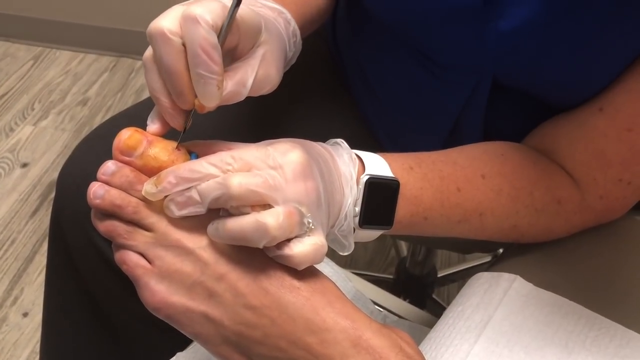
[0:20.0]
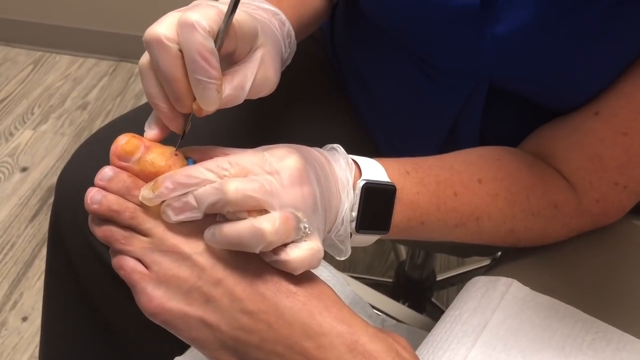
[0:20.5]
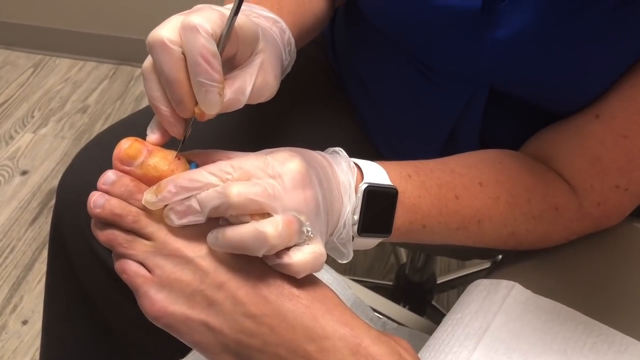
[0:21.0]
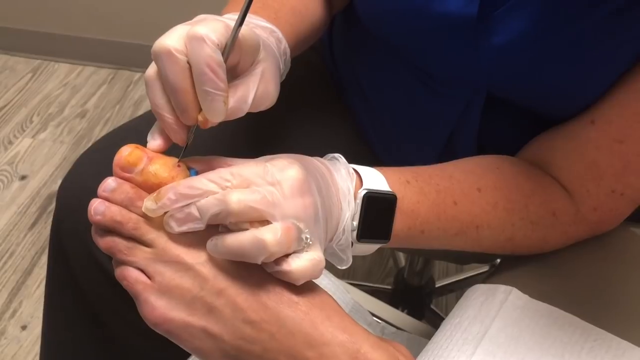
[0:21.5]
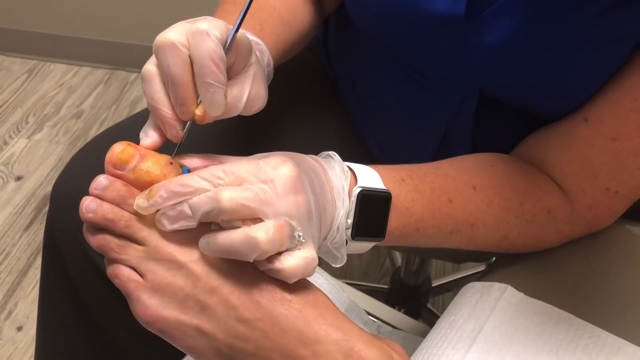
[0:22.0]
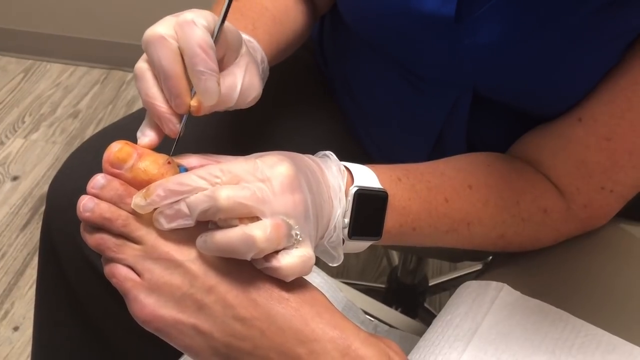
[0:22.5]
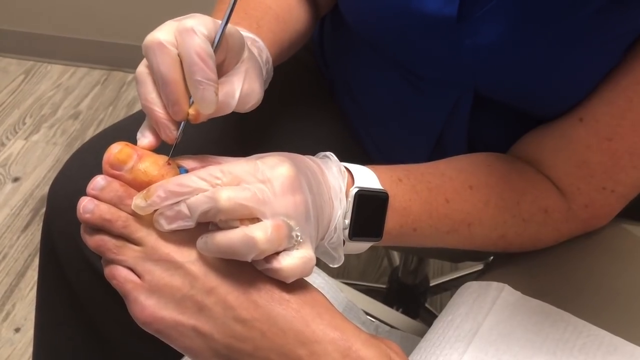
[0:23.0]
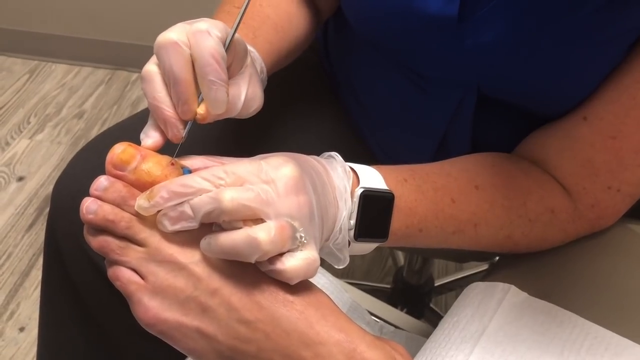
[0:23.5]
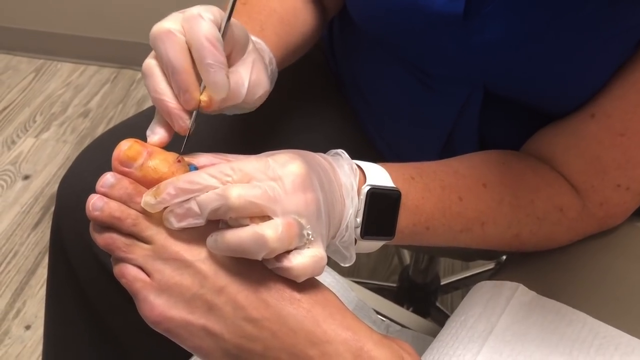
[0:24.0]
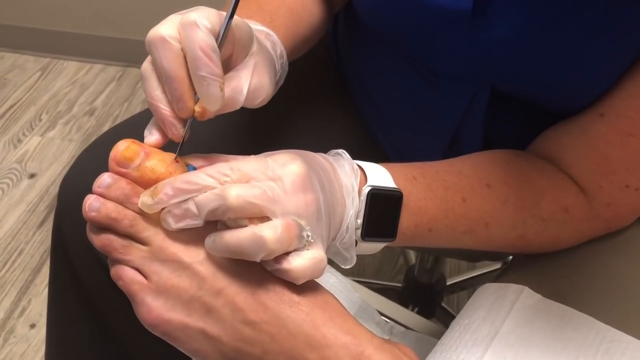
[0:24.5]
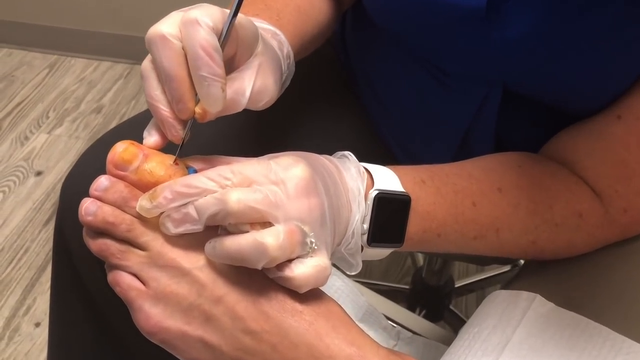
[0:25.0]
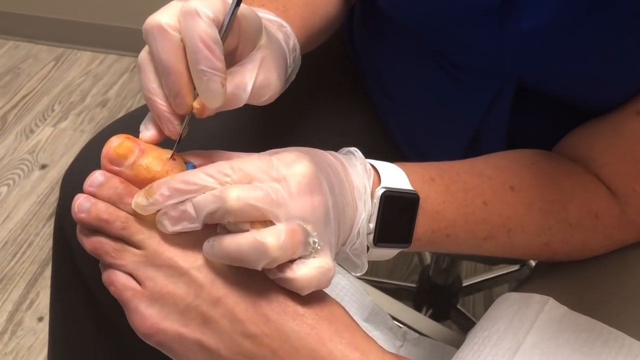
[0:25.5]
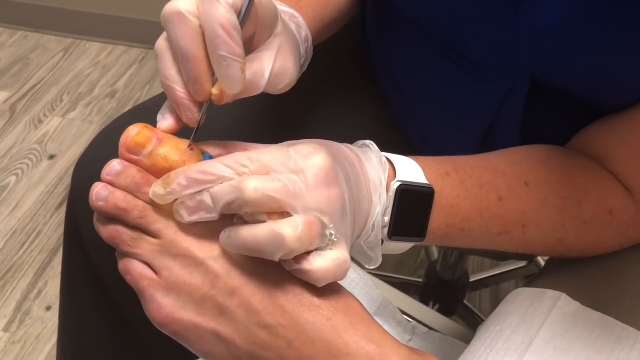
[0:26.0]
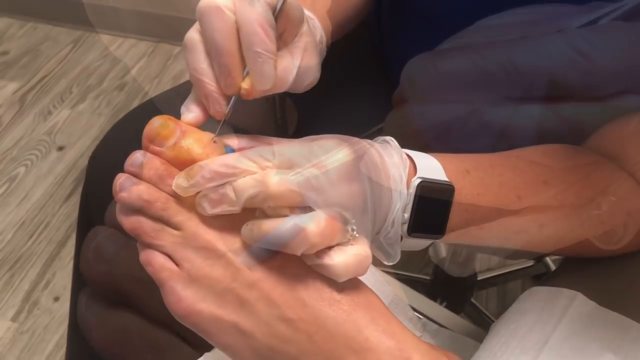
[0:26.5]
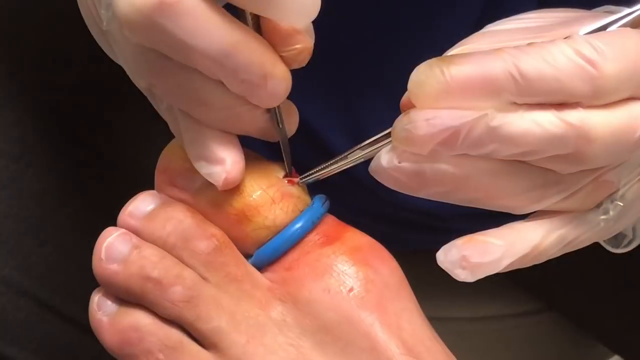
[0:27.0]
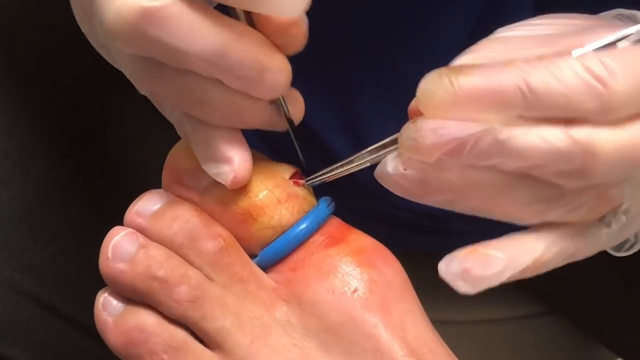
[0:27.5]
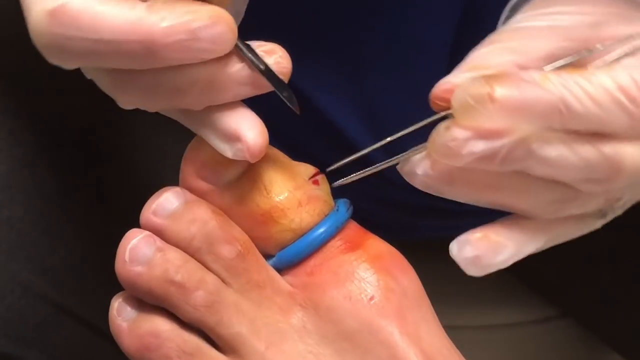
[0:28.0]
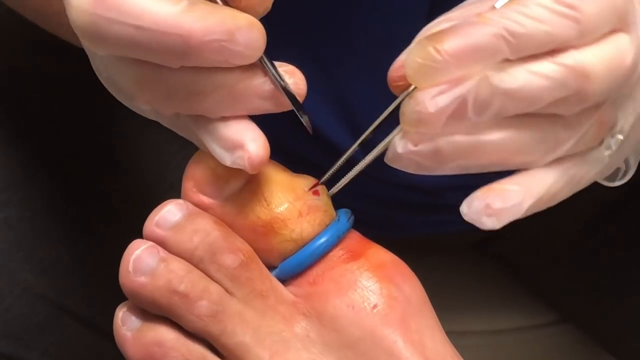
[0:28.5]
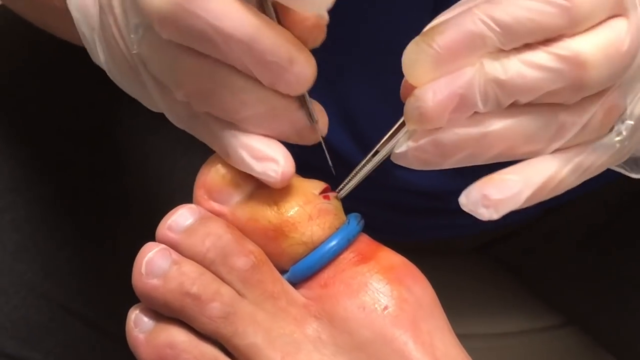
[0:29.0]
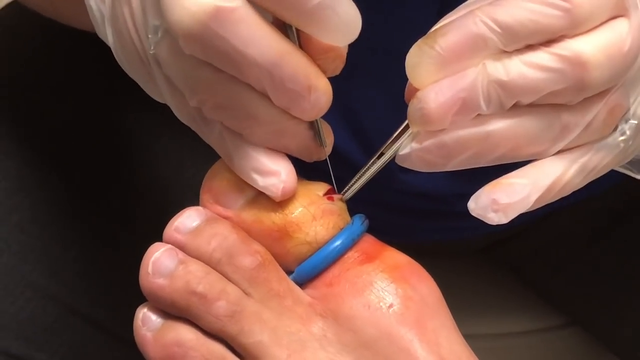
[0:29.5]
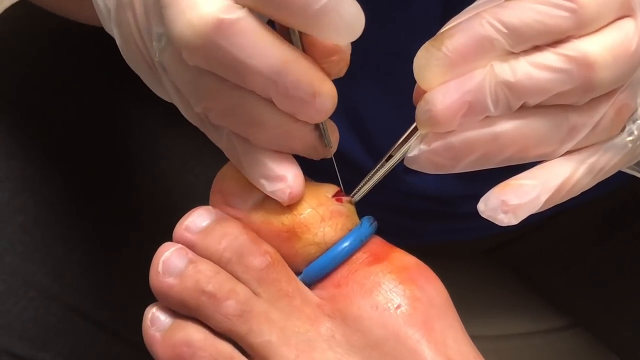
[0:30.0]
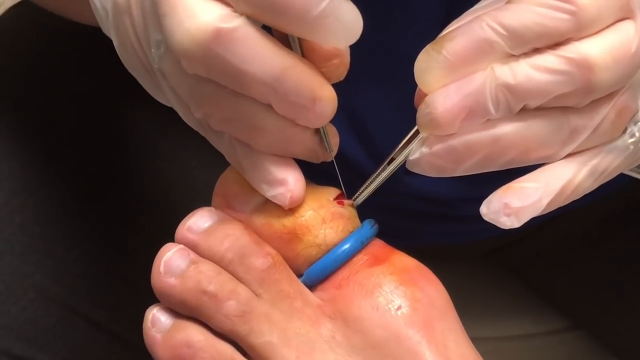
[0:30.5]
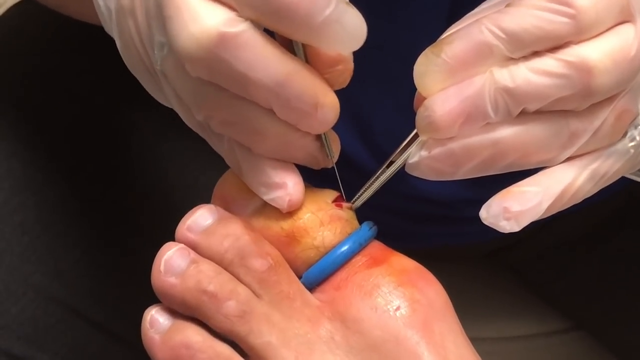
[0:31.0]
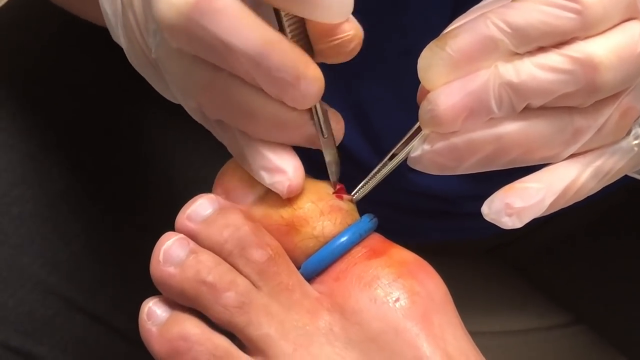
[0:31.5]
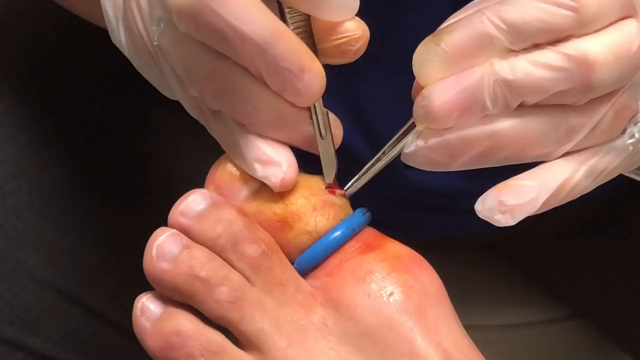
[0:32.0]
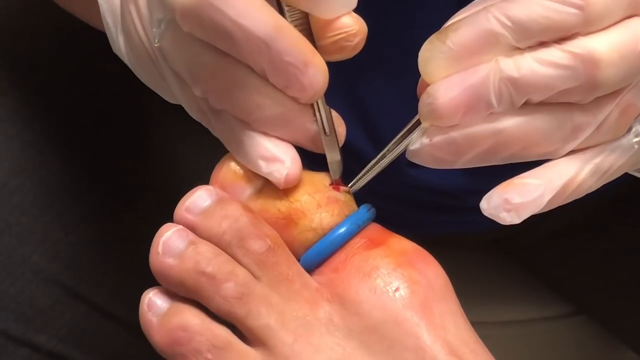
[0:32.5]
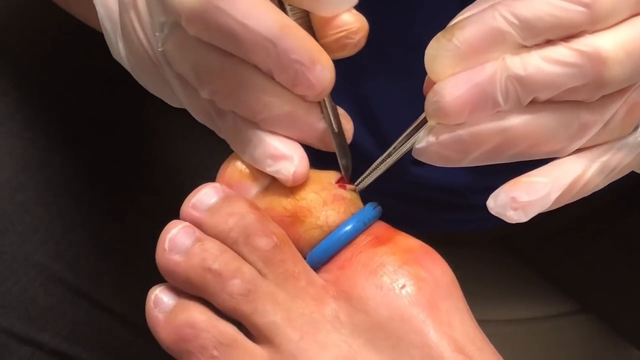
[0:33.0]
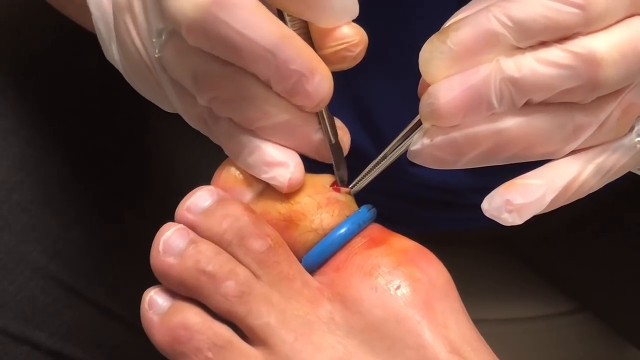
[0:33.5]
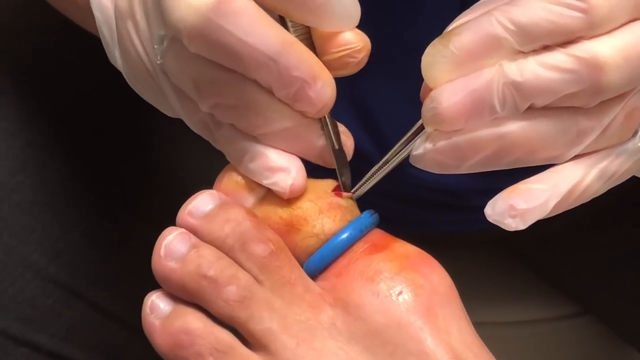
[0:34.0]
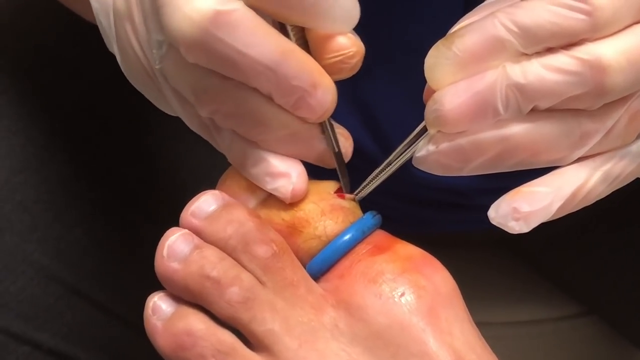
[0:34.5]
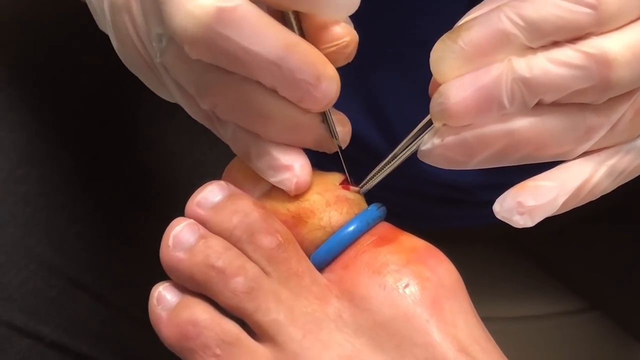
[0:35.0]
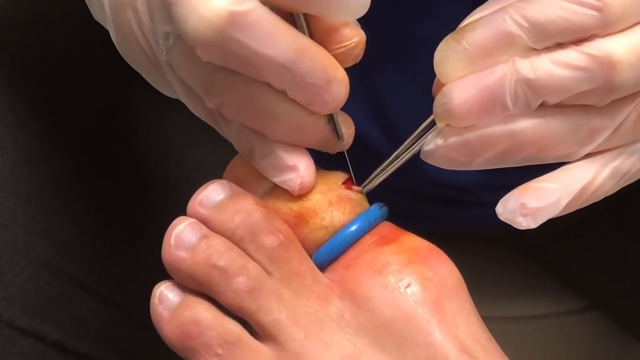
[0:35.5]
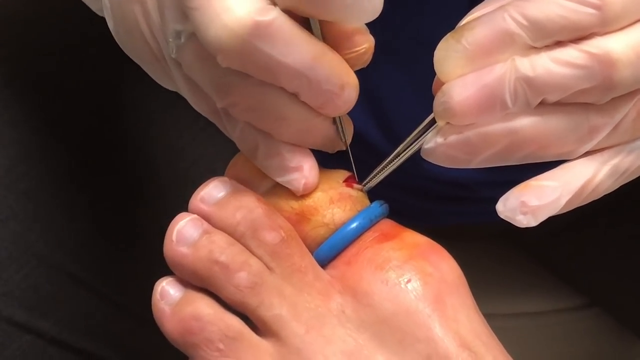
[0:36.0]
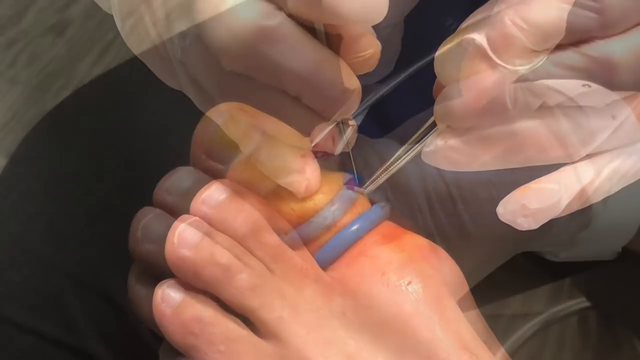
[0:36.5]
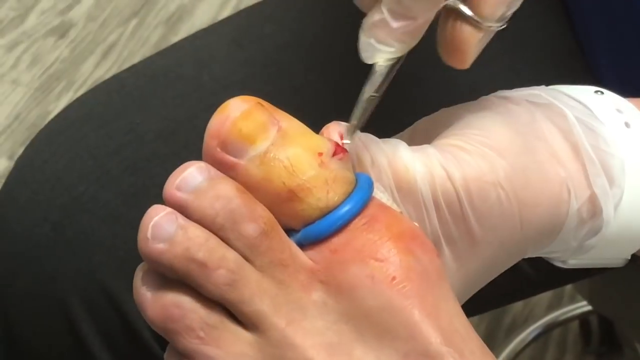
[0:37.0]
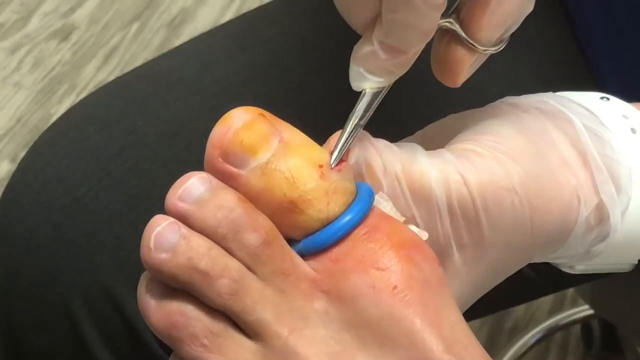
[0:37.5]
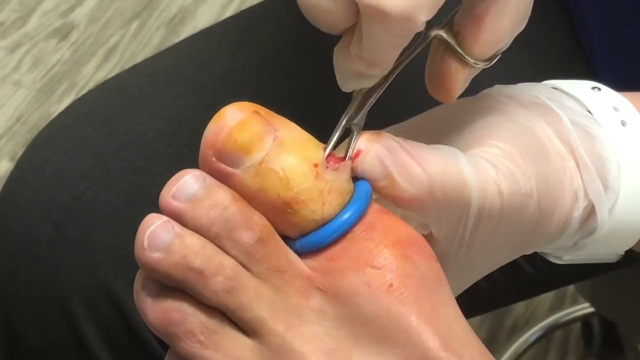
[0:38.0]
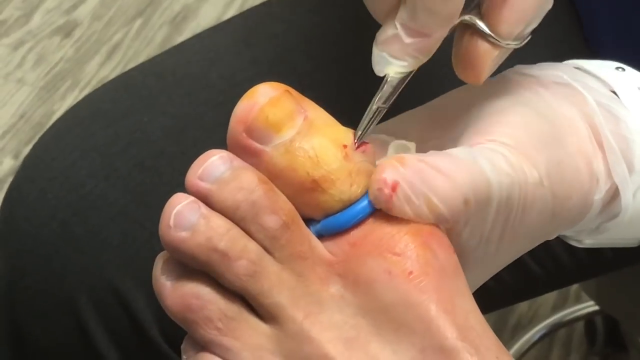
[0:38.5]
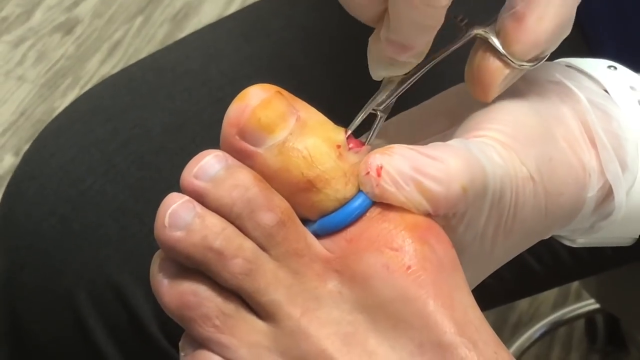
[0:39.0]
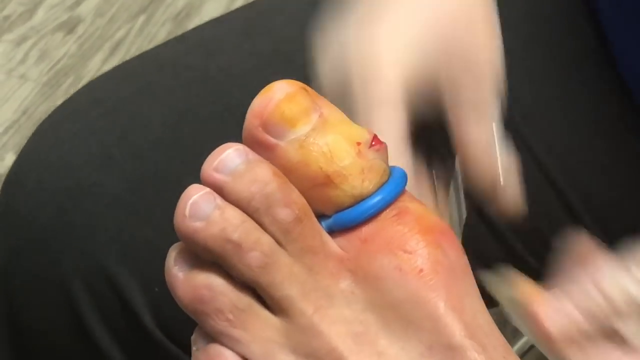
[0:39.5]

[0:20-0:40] The woman, wearing a sleeveless blue blouse, black pants and gloves, holds up a purple pen with her right hand. A close-up angle shows the foot, with the person's toe heavily bruised. The woman makes marks on the toe with the purple pen. She then makes some incisions on the toe, opening the skin and continuing to make deeper incisions. The toe has a blue ring around it. The scene is indoors and well lit with artificial light, in a rectangular frame. The floor in the background looks to be brown and gray hardwood.